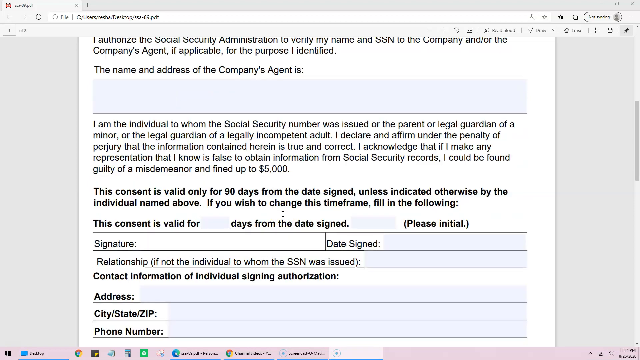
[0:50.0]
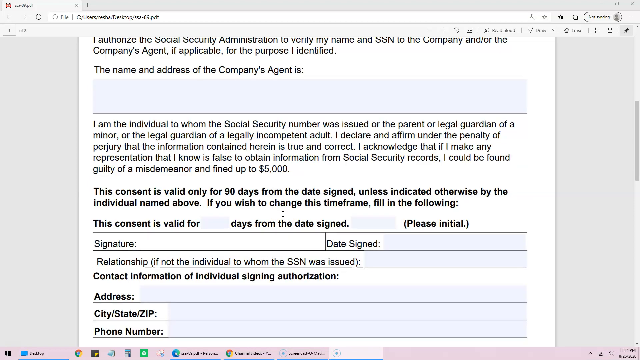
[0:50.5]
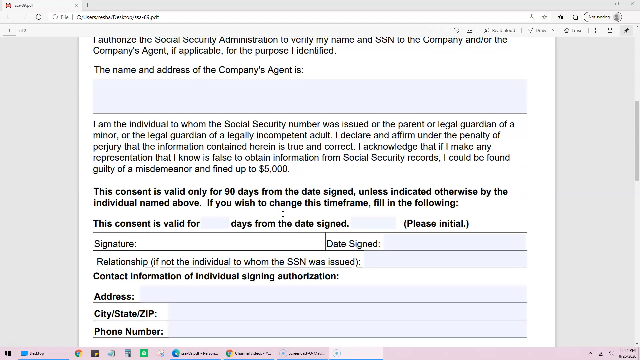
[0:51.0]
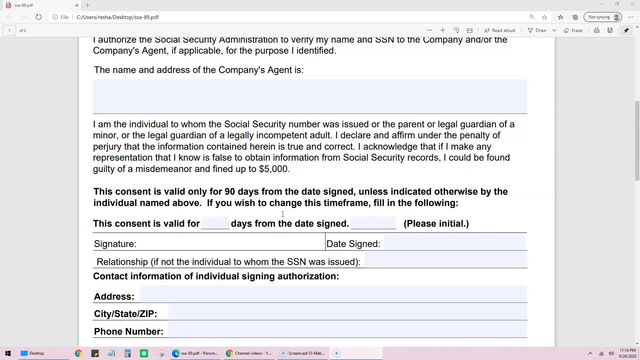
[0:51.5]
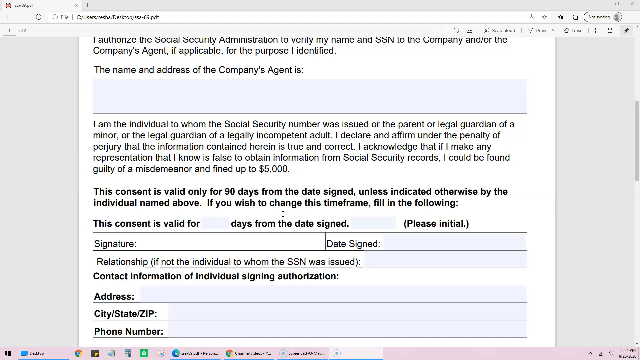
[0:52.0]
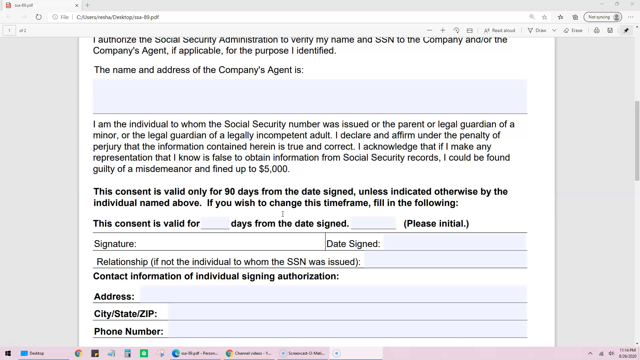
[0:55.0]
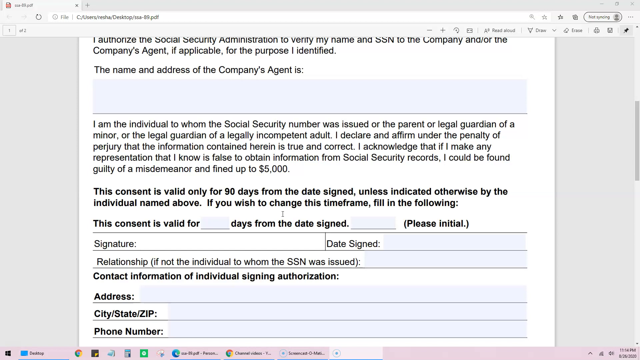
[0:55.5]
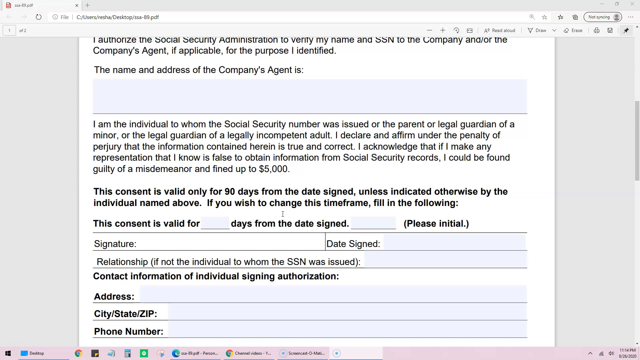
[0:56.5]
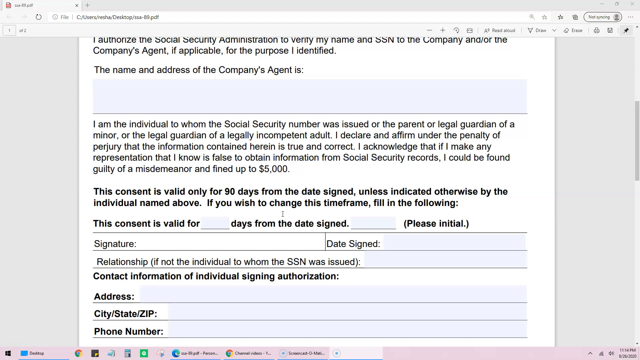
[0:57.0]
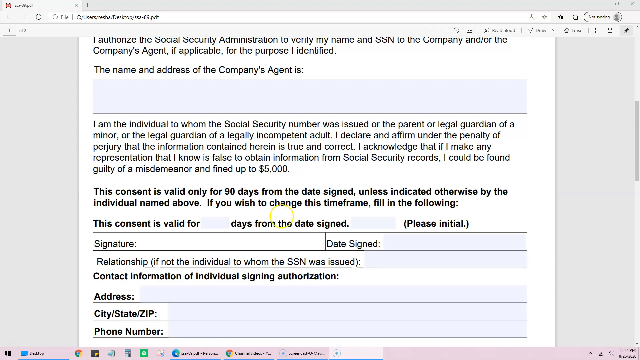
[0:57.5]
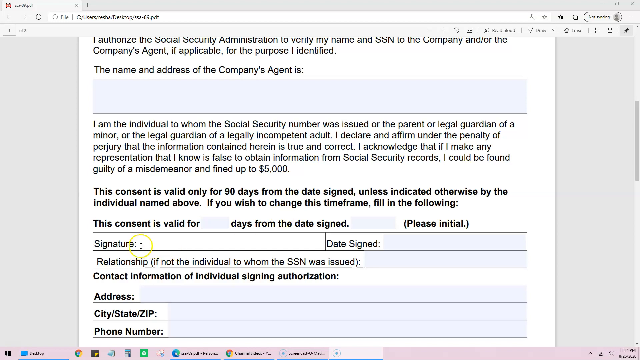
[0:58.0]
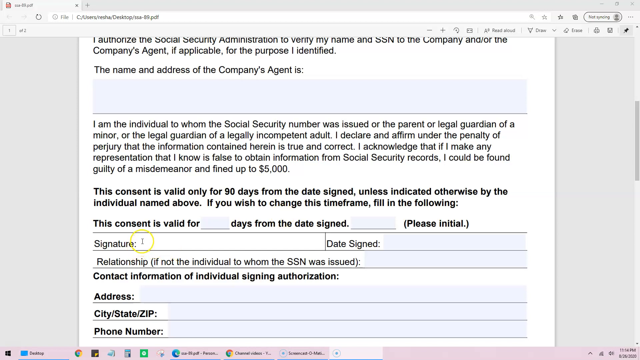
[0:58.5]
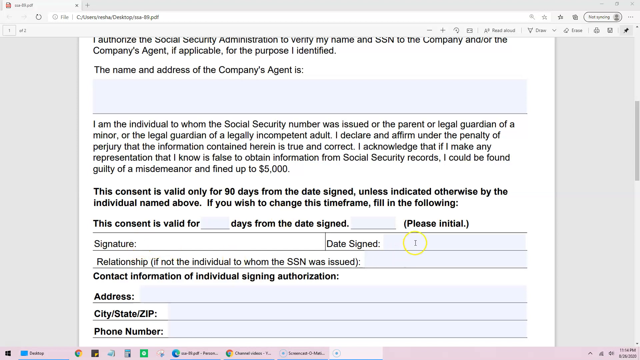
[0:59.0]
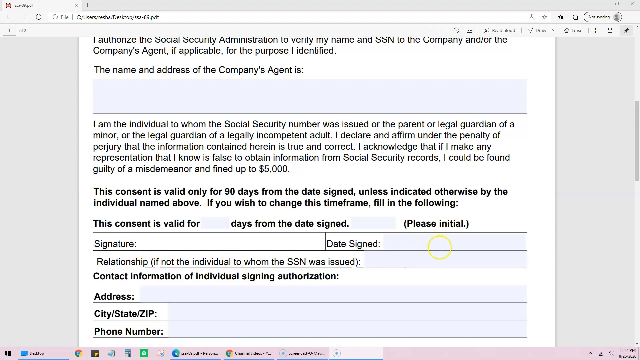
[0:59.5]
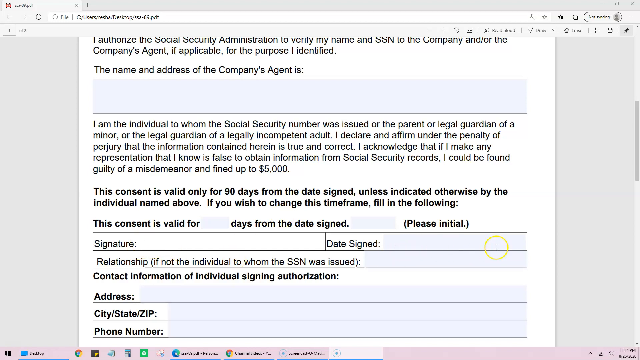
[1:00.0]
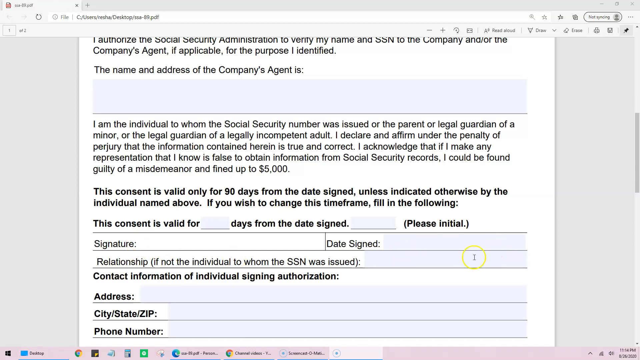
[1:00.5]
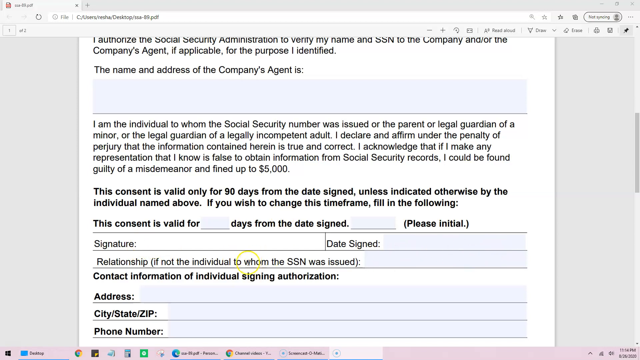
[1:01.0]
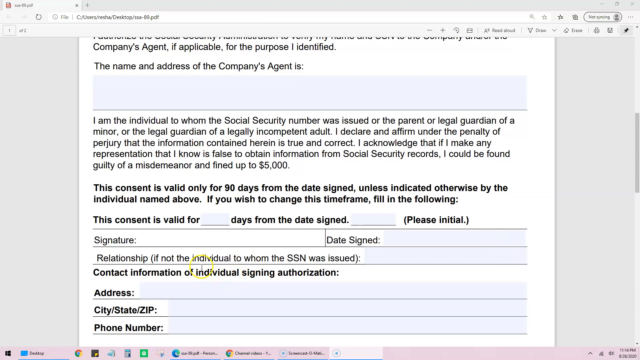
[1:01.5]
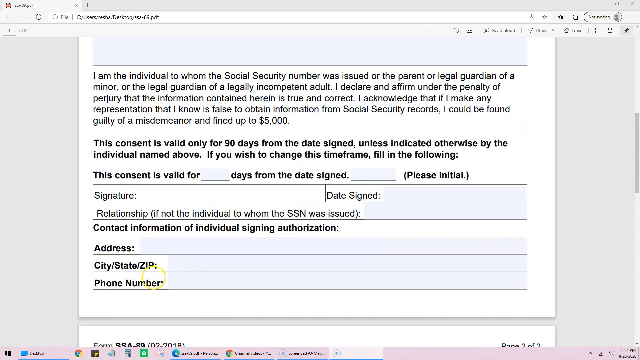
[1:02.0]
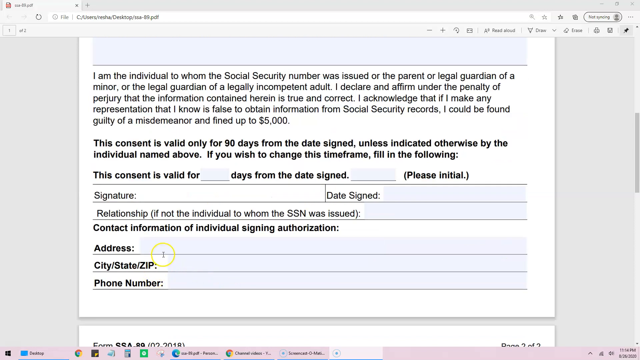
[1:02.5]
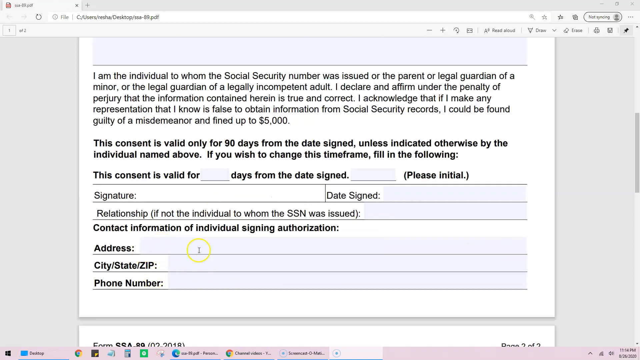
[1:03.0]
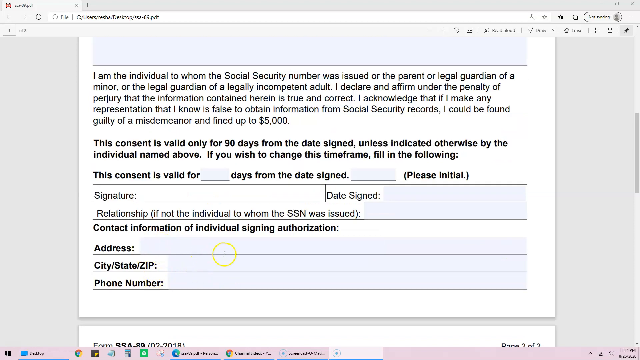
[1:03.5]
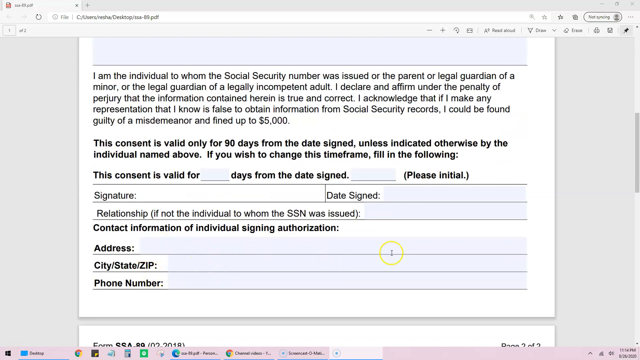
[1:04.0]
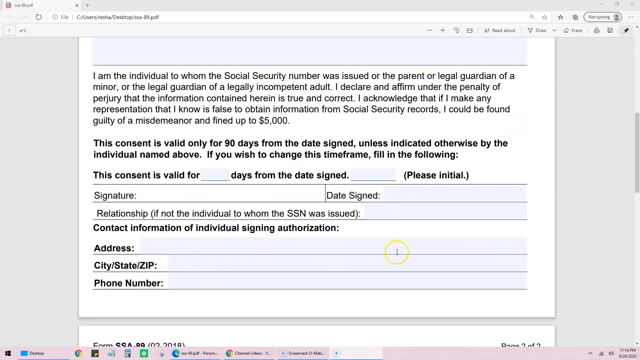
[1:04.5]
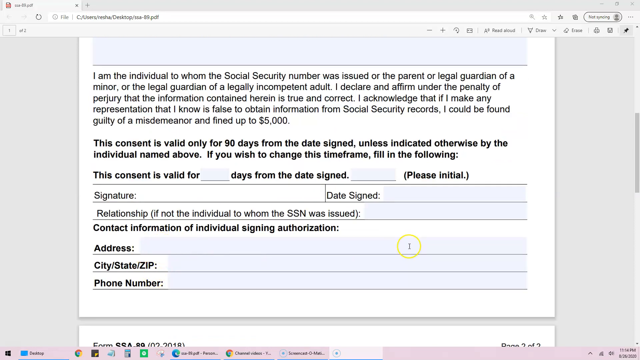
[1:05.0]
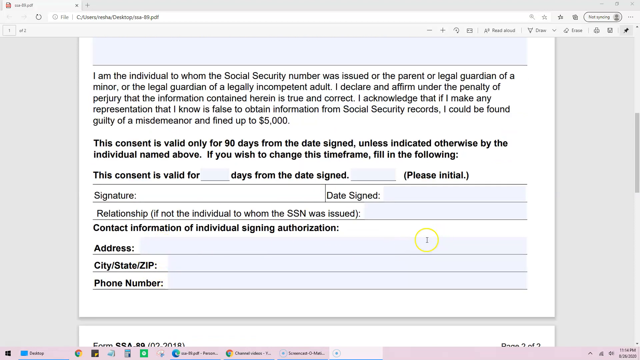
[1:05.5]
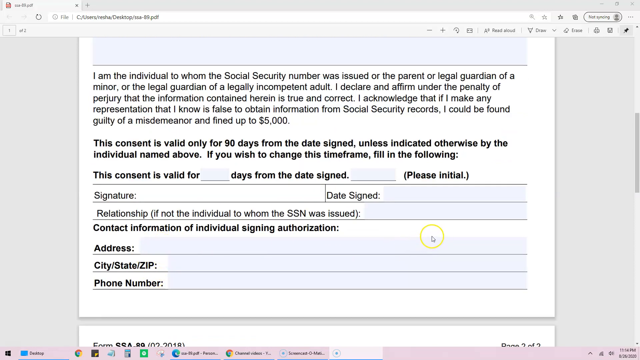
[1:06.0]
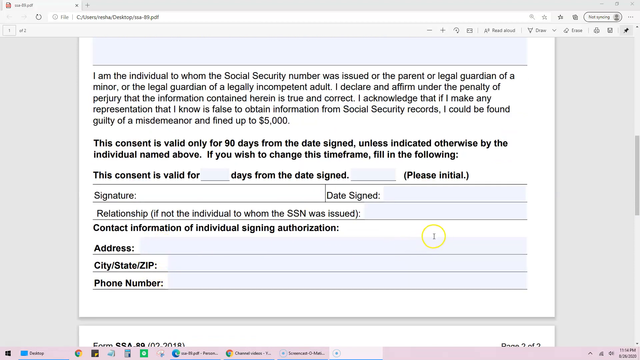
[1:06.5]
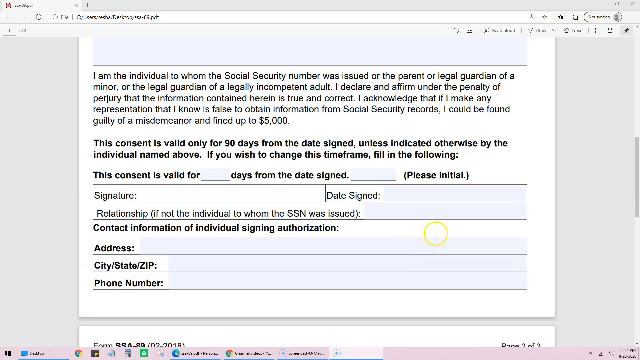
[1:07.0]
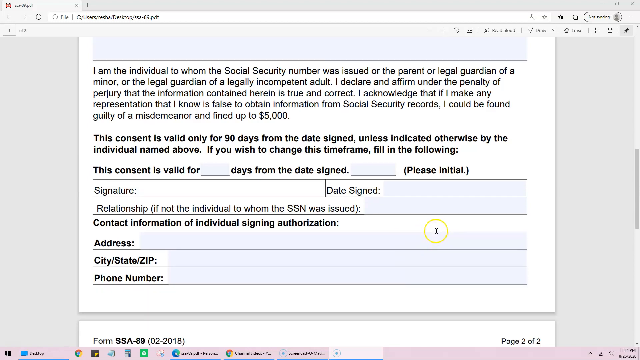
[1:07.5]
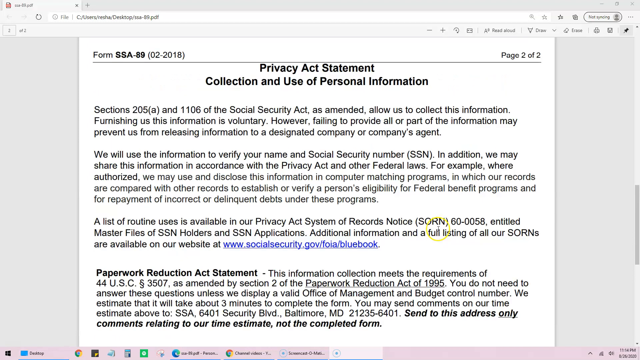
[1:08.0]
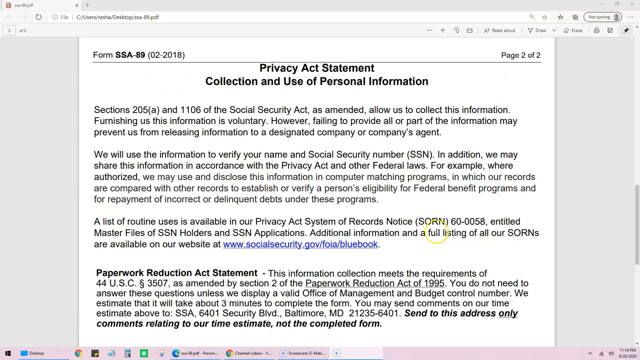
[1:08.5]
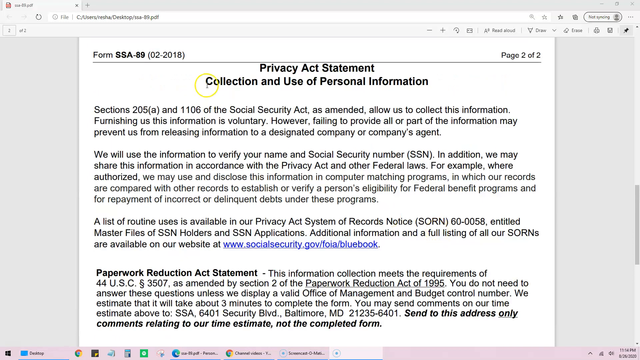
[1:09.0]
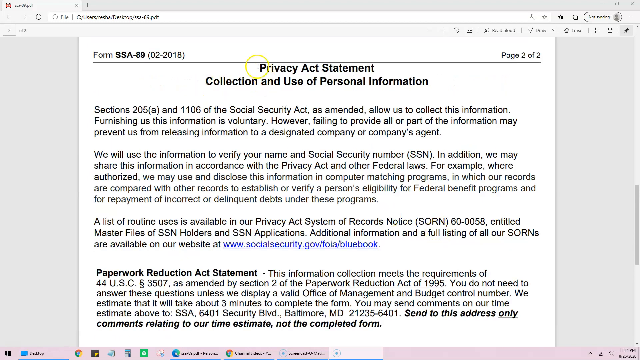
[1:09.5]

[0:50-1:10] A PDF form is open in a web browser tab. Various fields to be filled out appear throughout the form, including the name and address of the company's agent, with a field below it that can be typed into. Further down, someone moves a mouse pointer with a yellow circle around it for high visibility to the different areas to be filled out, such as the signature, the date signed, and the contact information: address, city, state, zip code, and phone number. At the bottom part of the form is the Privacy Act Statement, collection and use of personal information, followed by paragraphs of information explaining the information being collected and, apparently, the legal definitions of the statement.